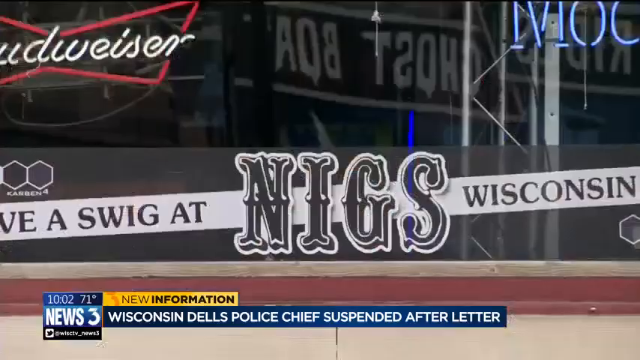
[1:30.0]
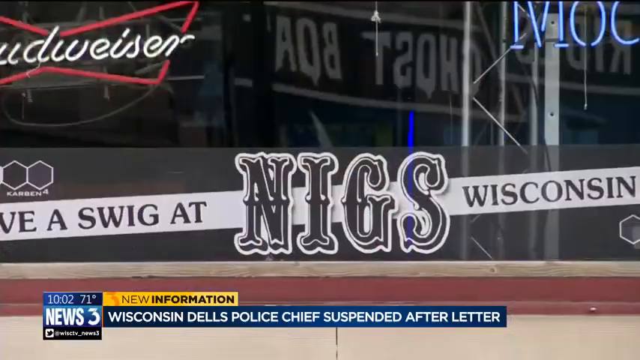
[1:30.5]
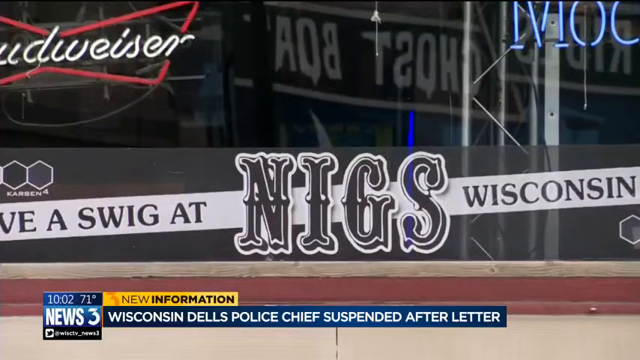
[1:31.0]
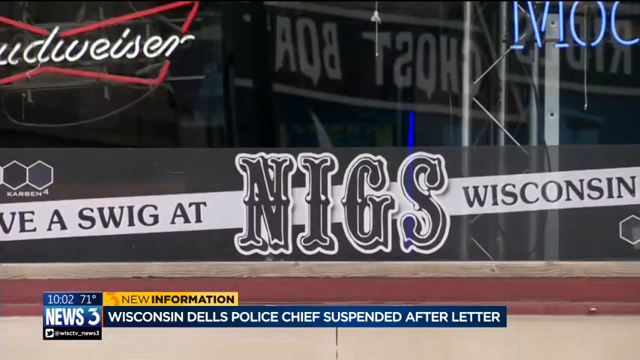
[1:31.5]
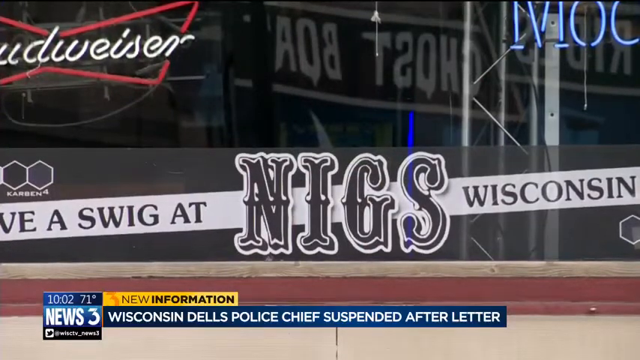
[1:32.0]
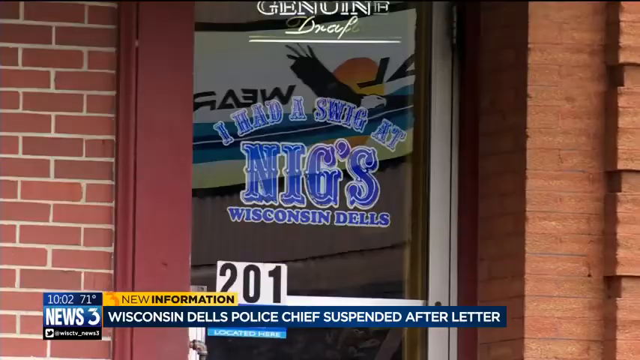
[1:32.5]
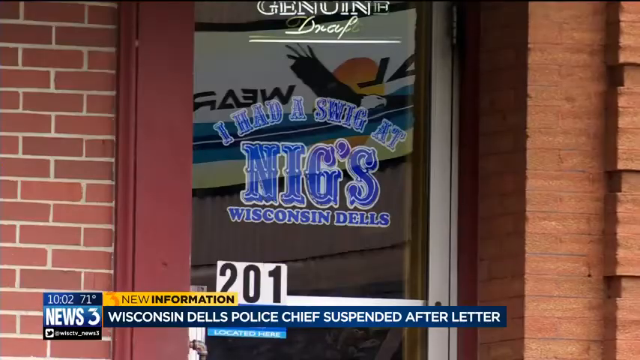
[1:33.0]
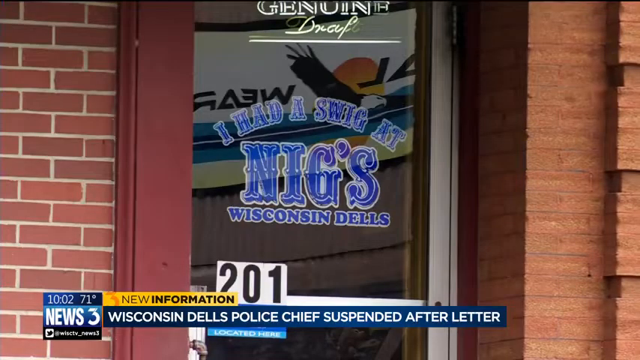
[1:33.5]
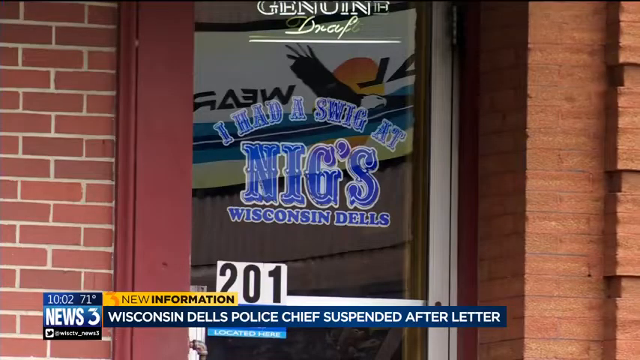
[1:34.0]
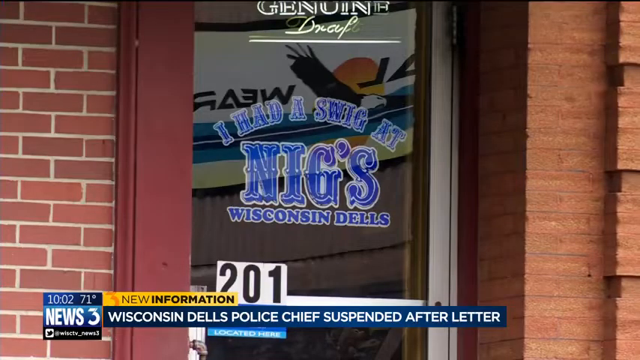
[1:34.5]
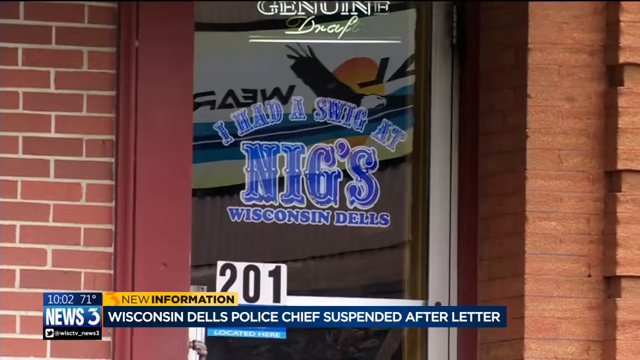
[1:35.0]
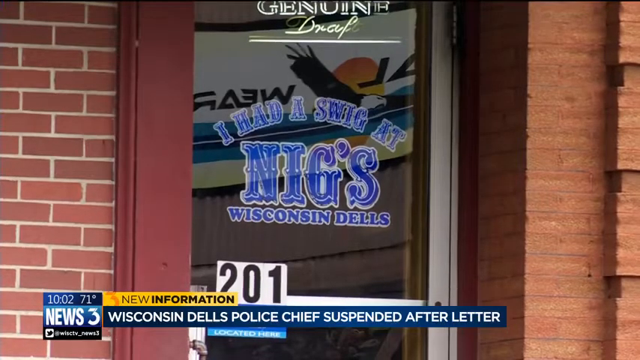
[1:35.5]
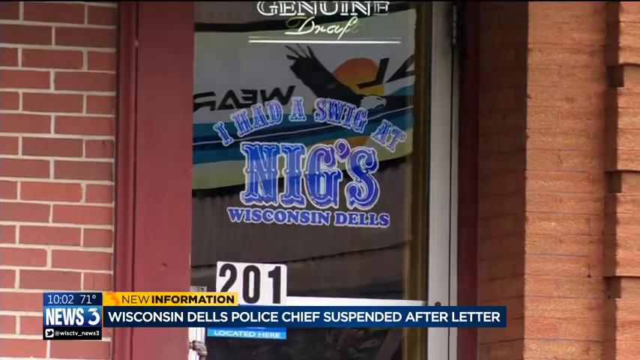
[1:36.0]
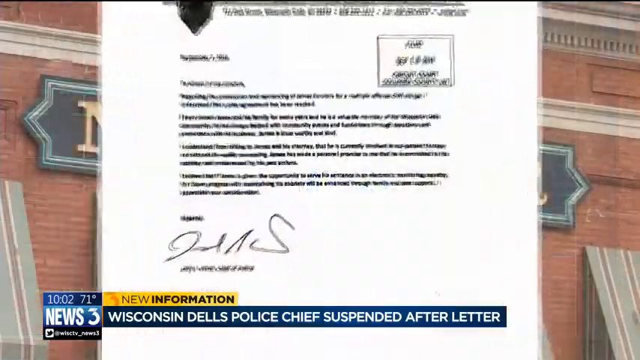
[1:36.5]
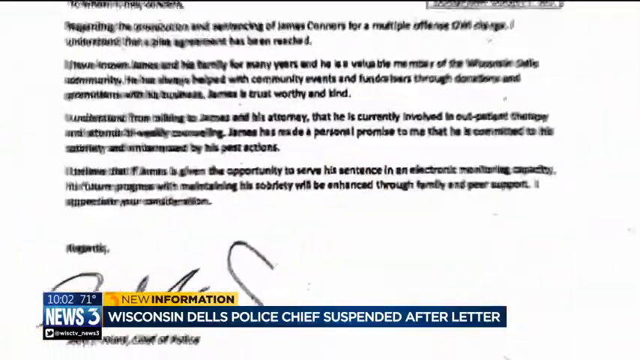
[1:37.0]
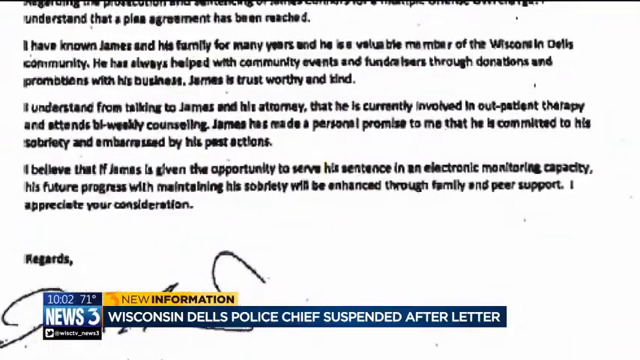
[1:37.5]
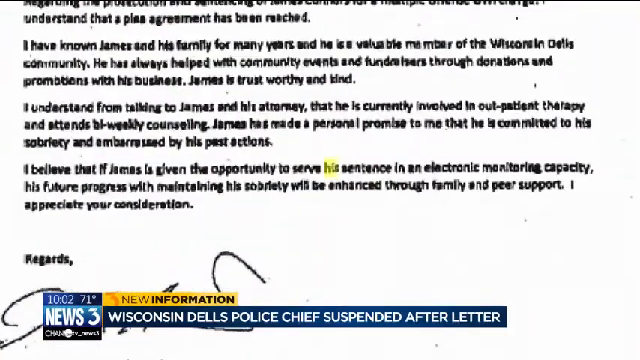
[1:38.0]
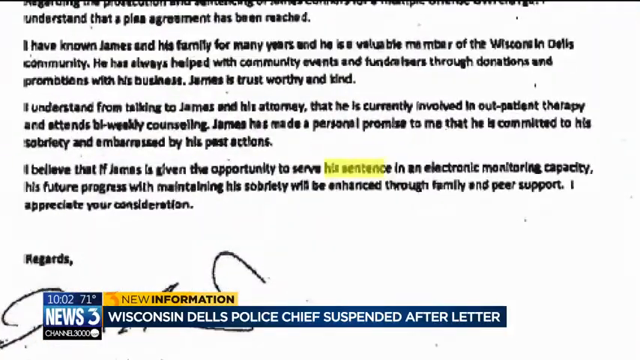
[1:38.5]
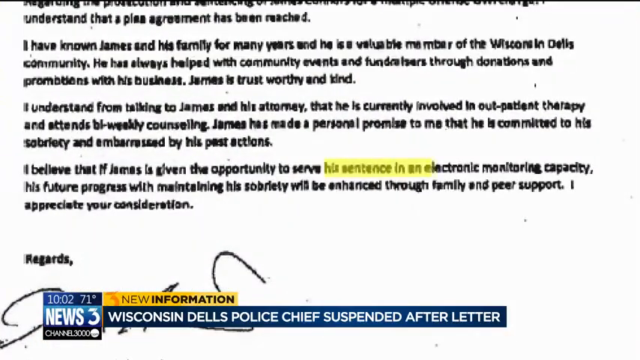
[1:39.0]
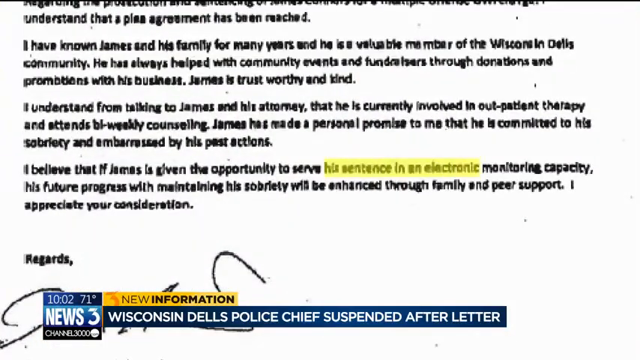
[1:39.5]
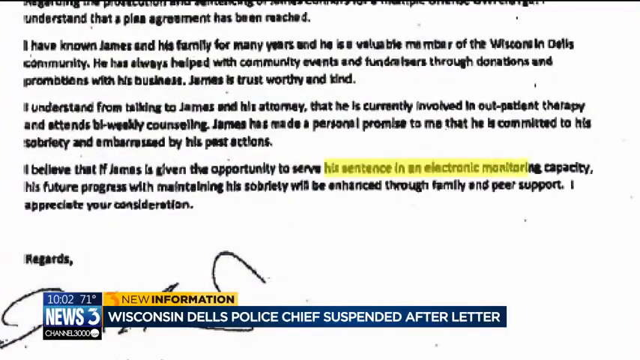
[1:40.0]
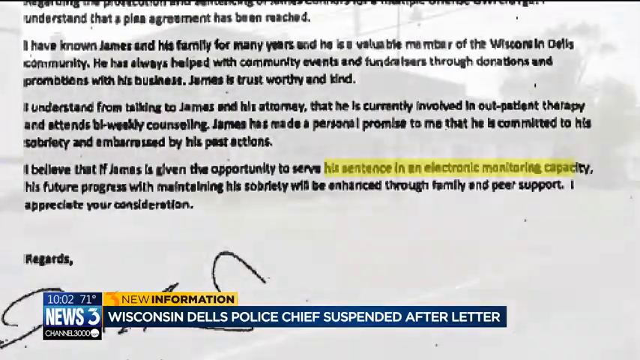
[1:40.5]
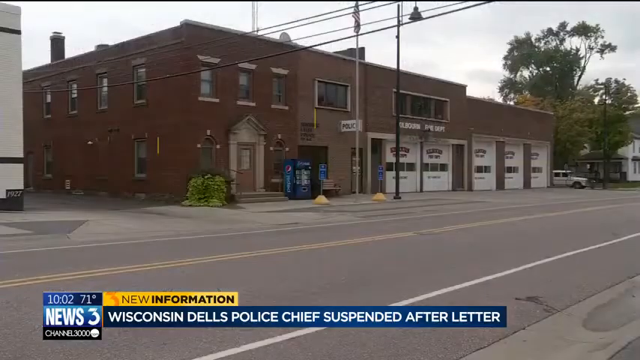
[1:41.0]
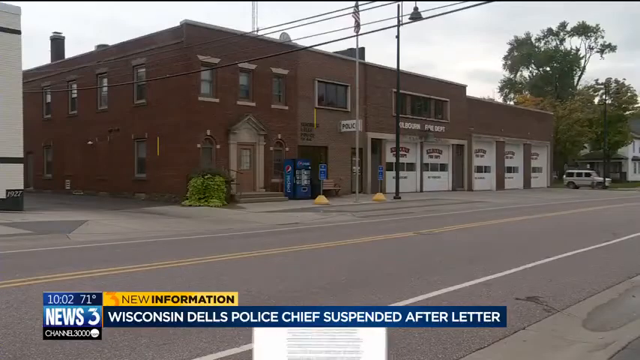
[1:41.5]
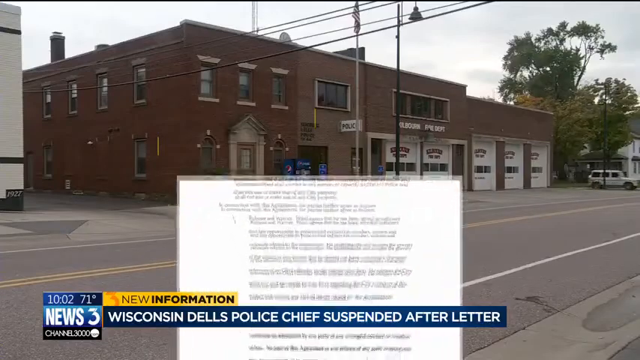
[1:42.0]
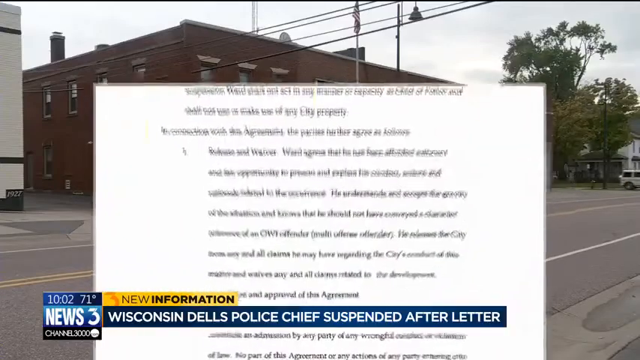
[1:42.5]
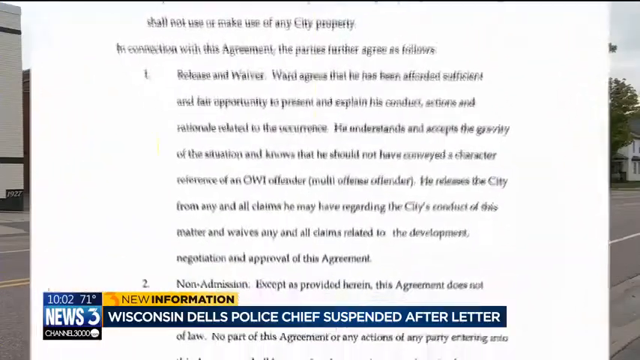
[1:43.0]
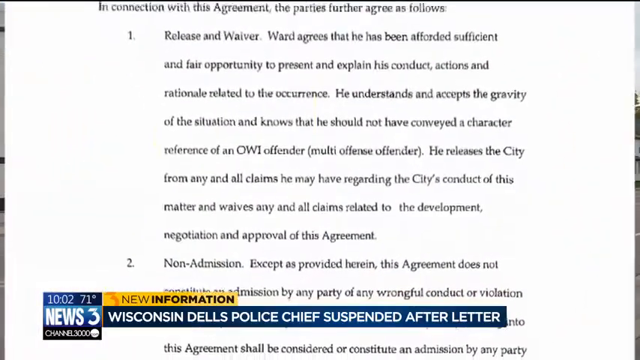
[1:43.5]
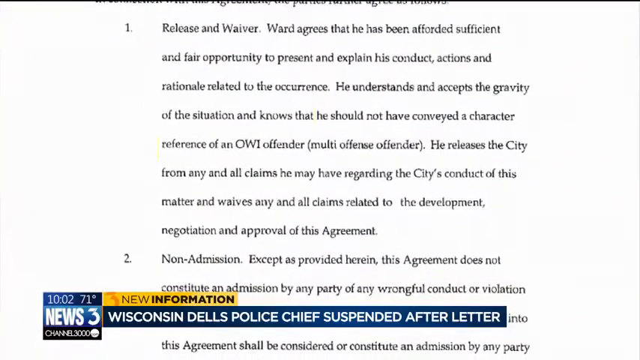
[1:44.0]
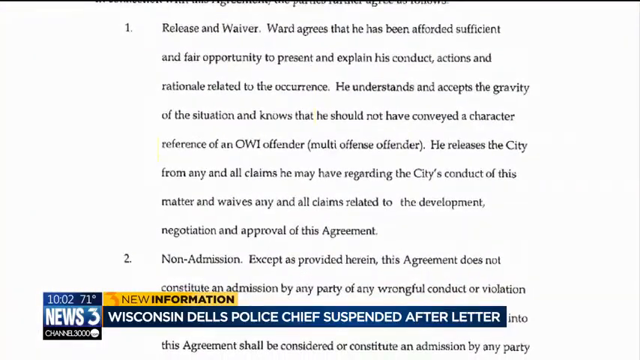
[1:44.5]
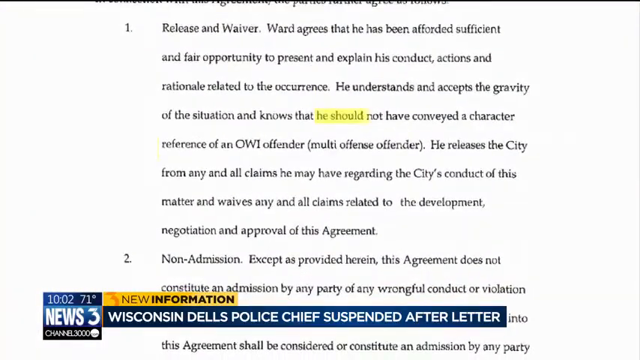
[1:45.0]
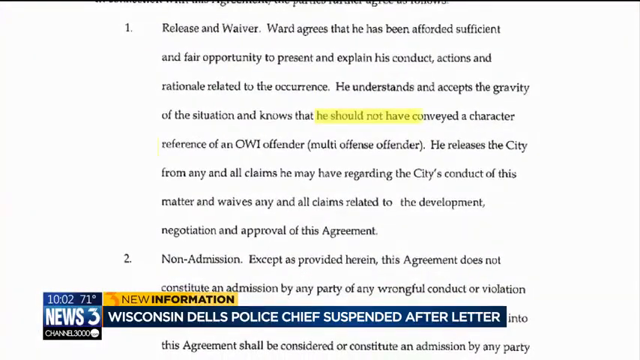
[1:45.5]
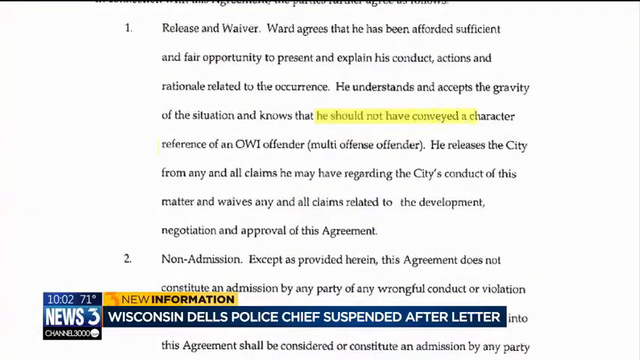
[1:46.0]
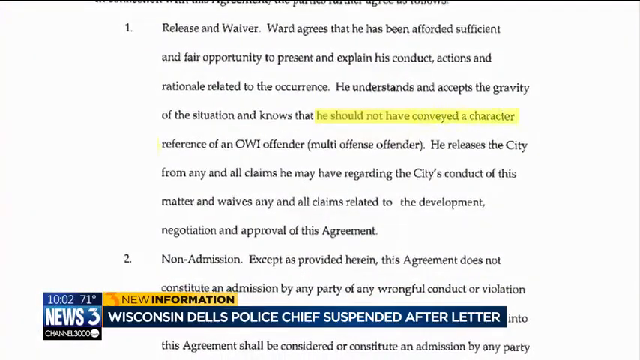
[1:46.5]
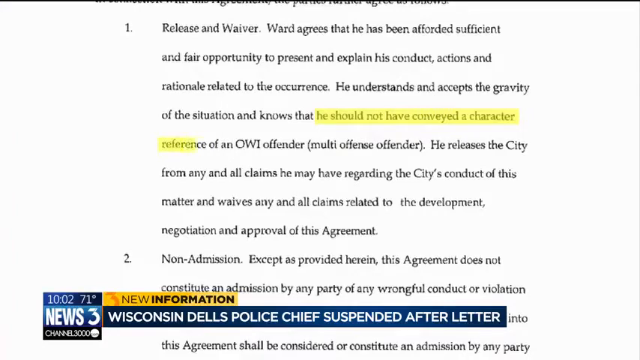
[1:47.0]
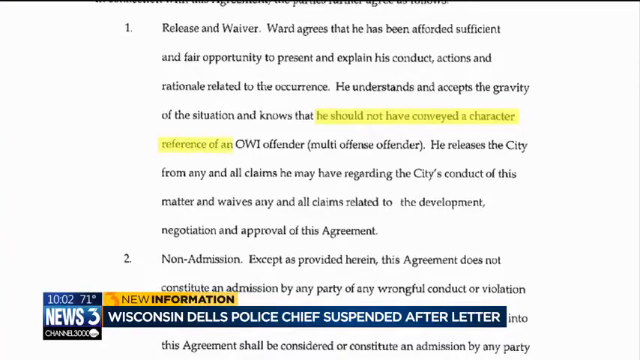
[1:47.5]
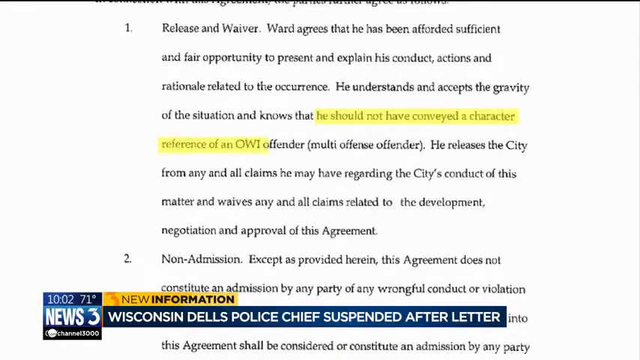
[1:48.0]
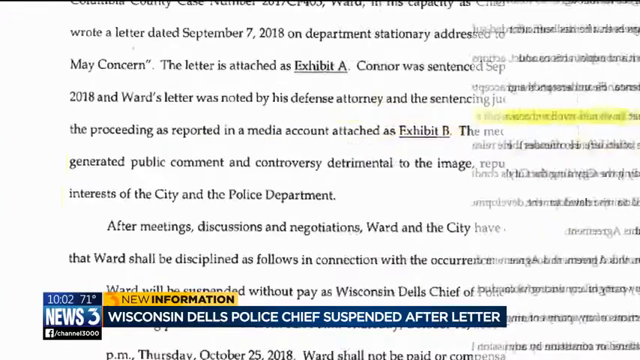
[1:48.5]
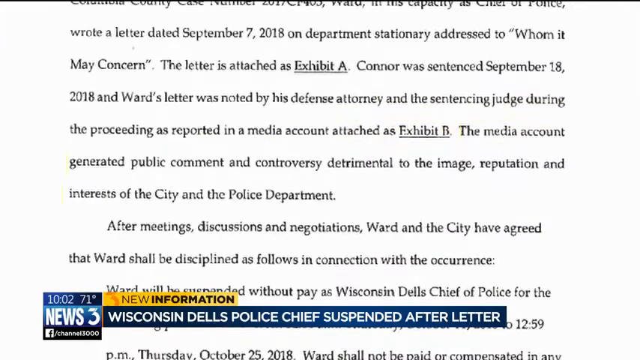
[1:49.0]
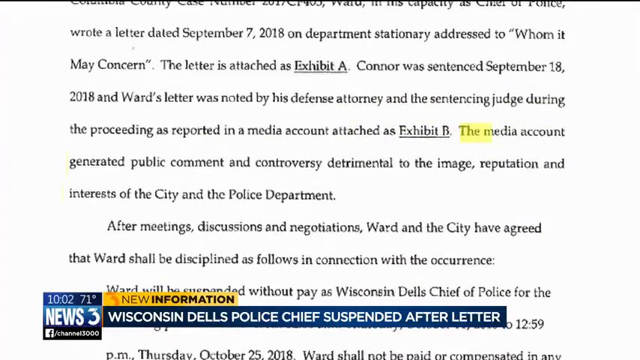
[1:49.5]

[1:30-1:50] On-screen text reads "NIGS," apparently the name of a bar, along with "Channel 3 News," new information, and the headline "Wisconsin Dales police chief suspended after letter," plus "Add a swig at NIGS, Wisconsin Dales." A letter follows, reading: "I've known James and his family for many years and he is a valuable member of the Wisconsin Dales community. He has always helped with community events and fundraisers through donations and promotions with his business. James is trustworthy and kind. I understand from talking to James and his attorney that he's currently involved in out-of-patient therapy and is in bi-weekly counseling. James has made a personal promise to me that he is committed to his sobriety and embarrassed by his past actions. I believe that if James is given an opportunity to serve his sentence in electronic monitoring capacity, his future progress with maintaining his sobriety will be enhanced through family and peer support. I appreciate your consideration."